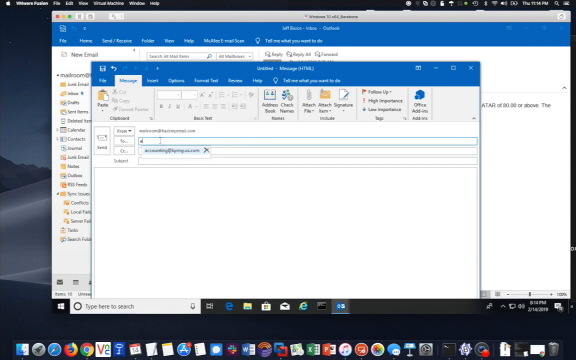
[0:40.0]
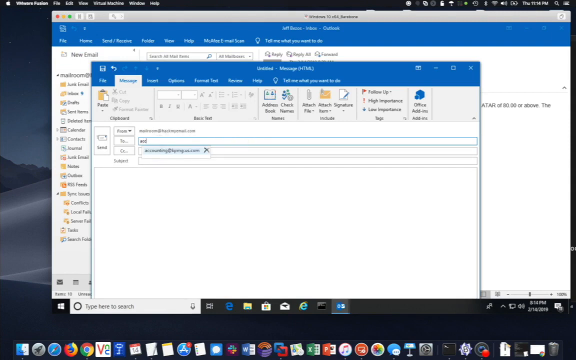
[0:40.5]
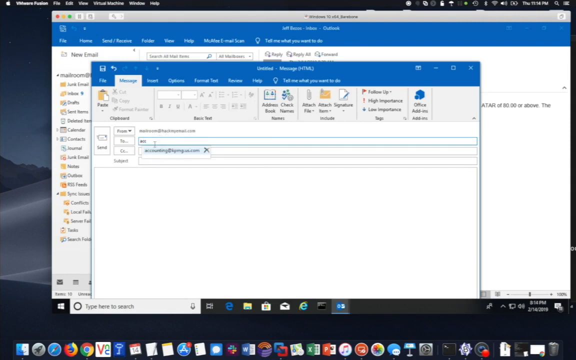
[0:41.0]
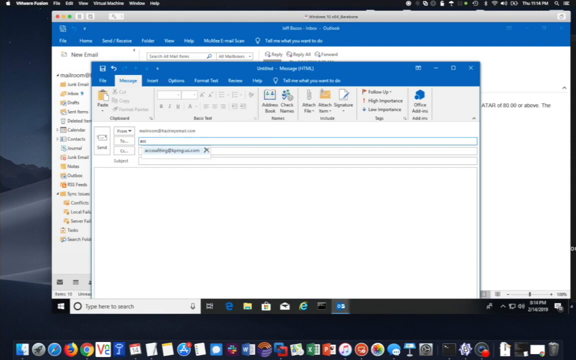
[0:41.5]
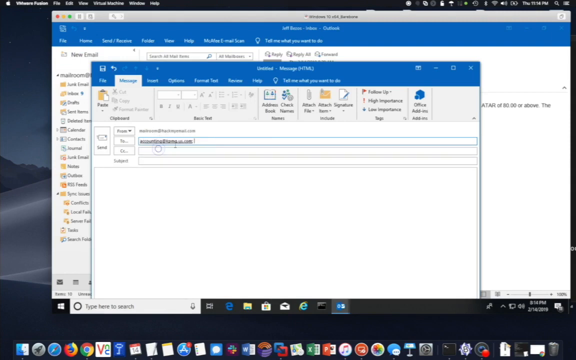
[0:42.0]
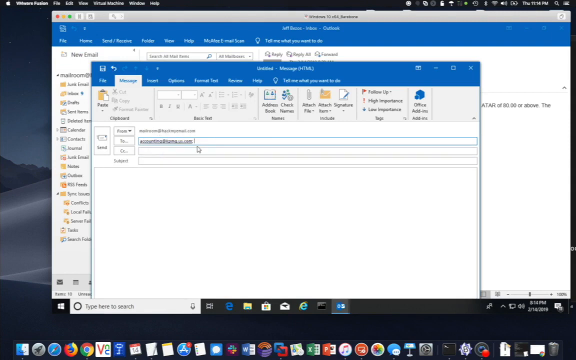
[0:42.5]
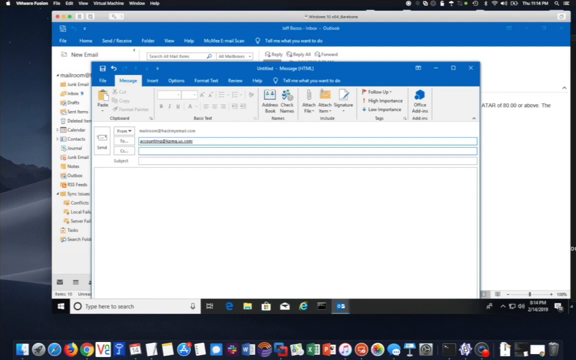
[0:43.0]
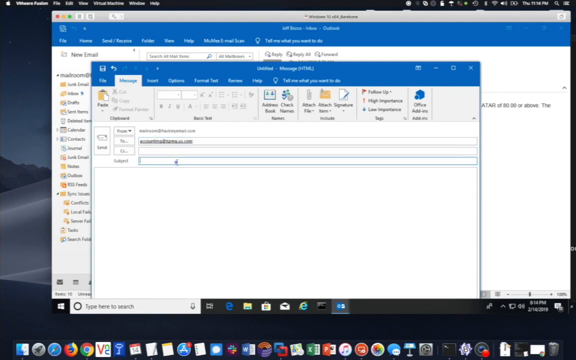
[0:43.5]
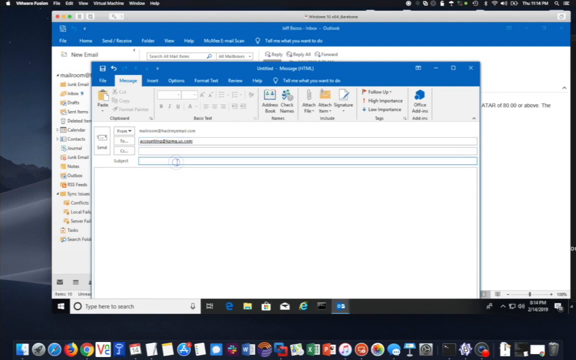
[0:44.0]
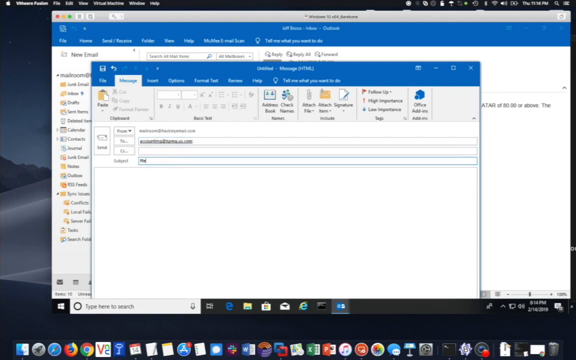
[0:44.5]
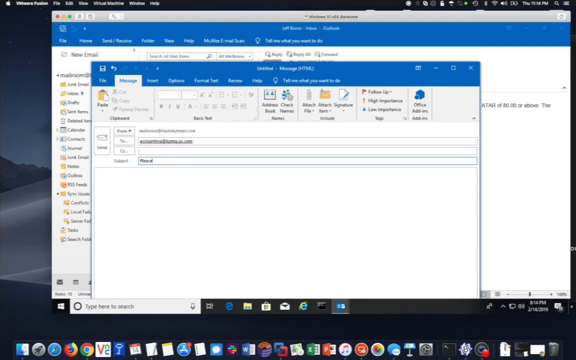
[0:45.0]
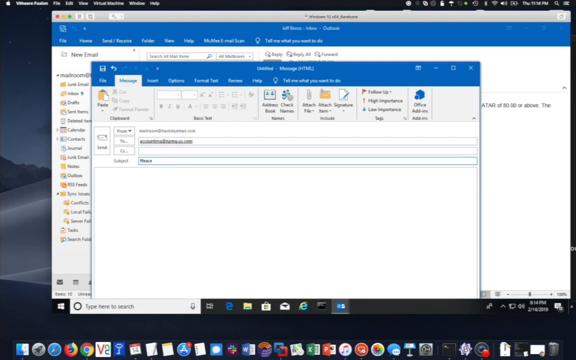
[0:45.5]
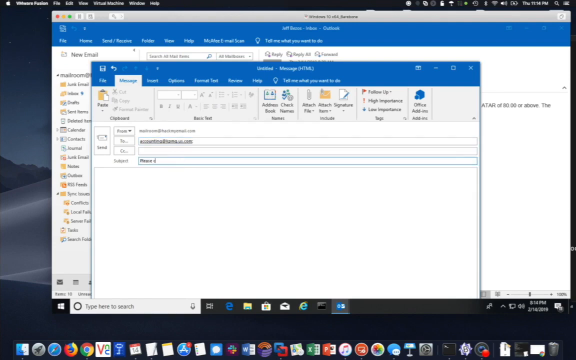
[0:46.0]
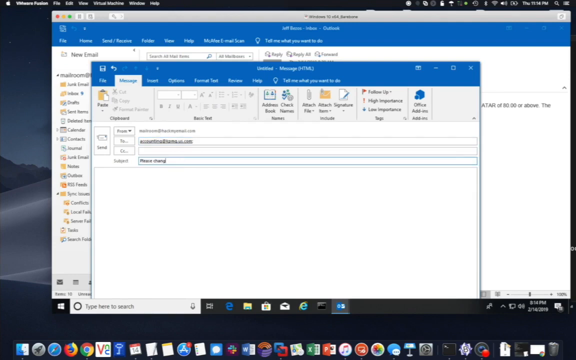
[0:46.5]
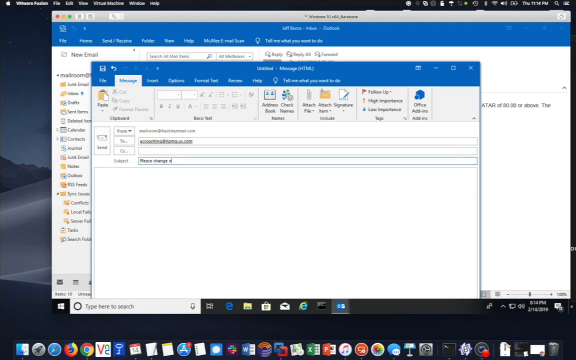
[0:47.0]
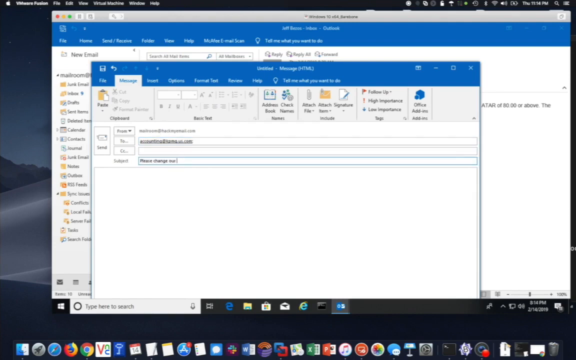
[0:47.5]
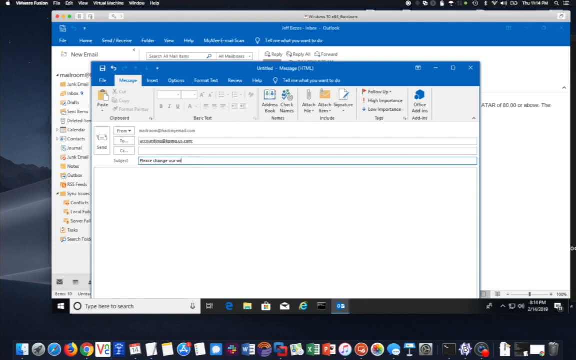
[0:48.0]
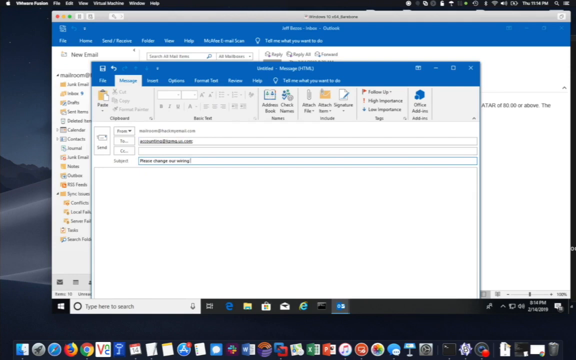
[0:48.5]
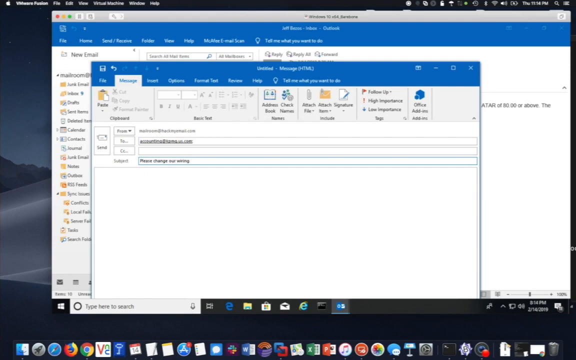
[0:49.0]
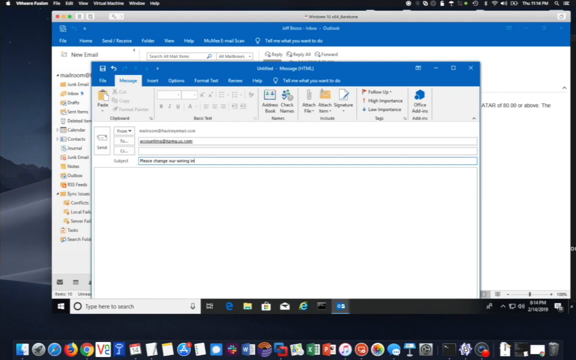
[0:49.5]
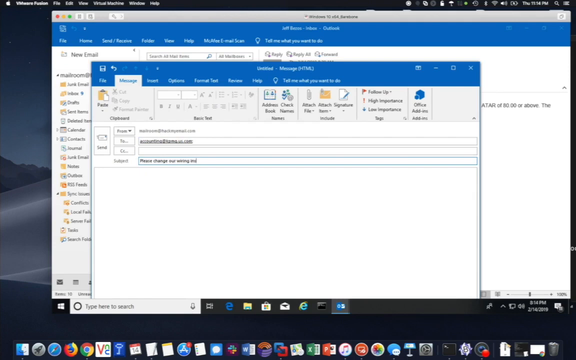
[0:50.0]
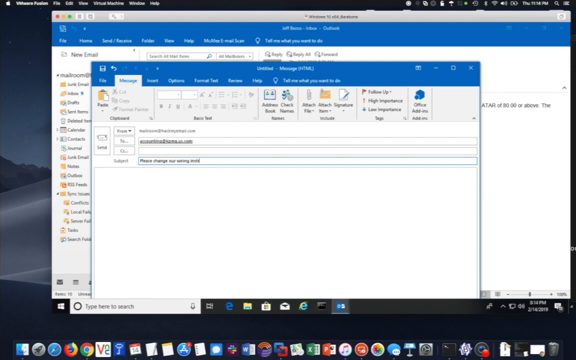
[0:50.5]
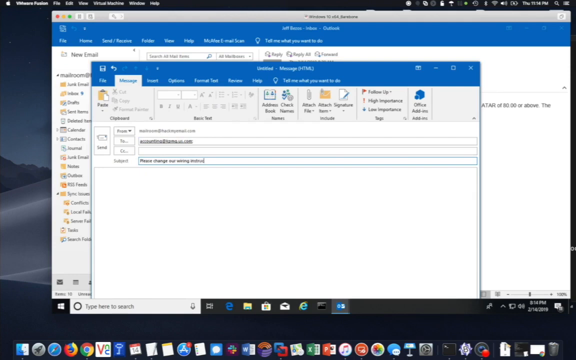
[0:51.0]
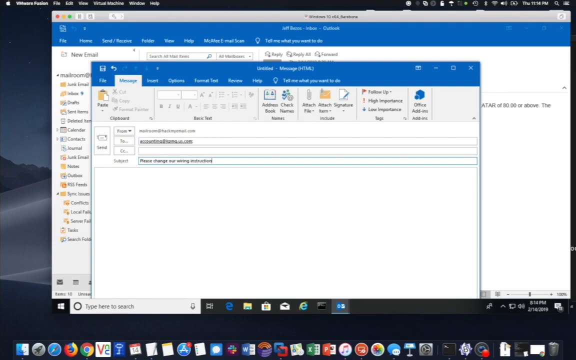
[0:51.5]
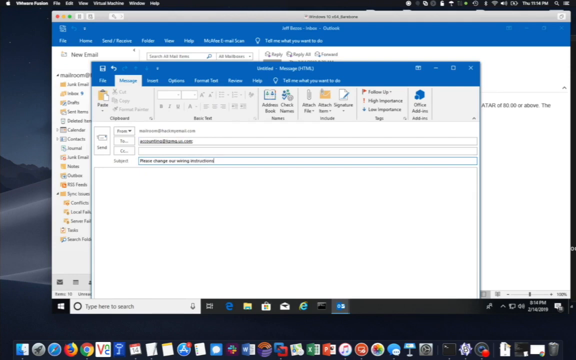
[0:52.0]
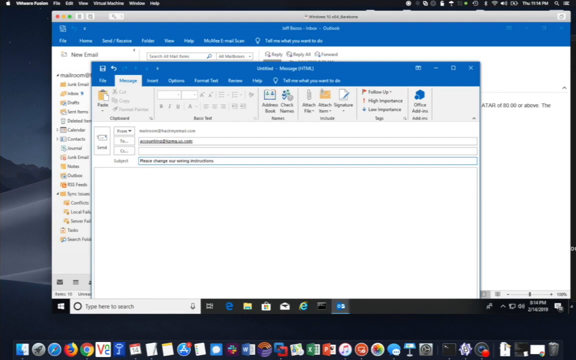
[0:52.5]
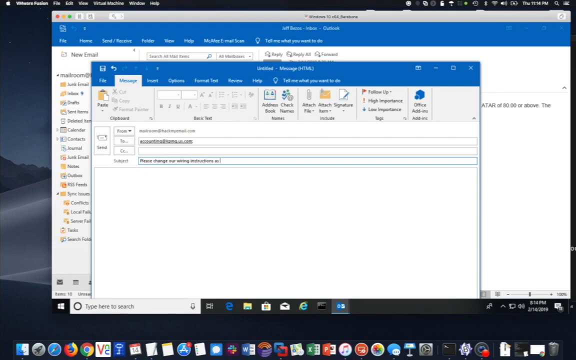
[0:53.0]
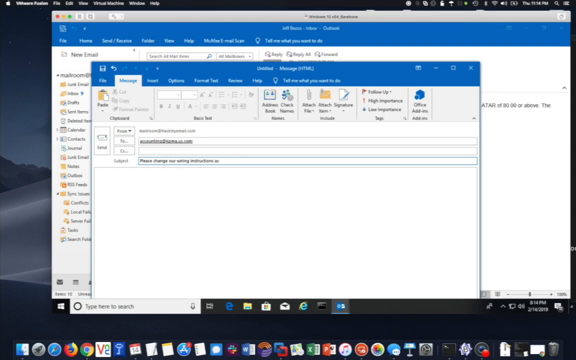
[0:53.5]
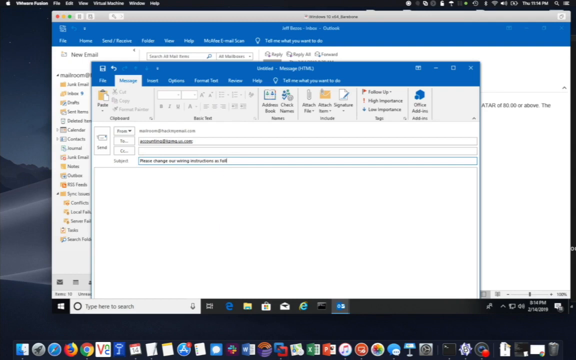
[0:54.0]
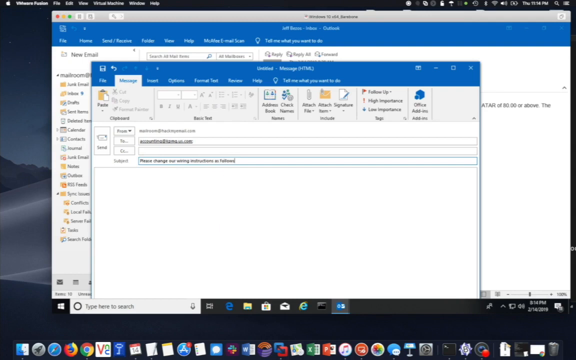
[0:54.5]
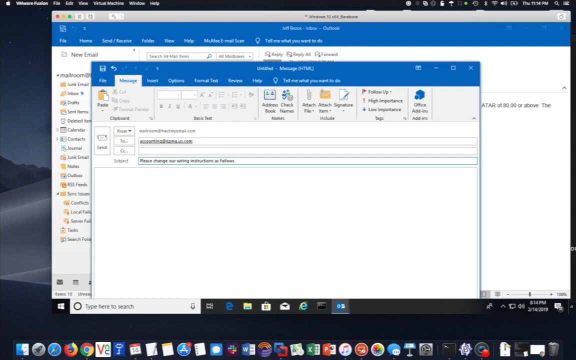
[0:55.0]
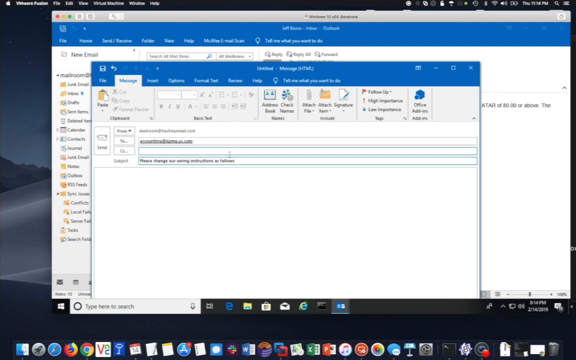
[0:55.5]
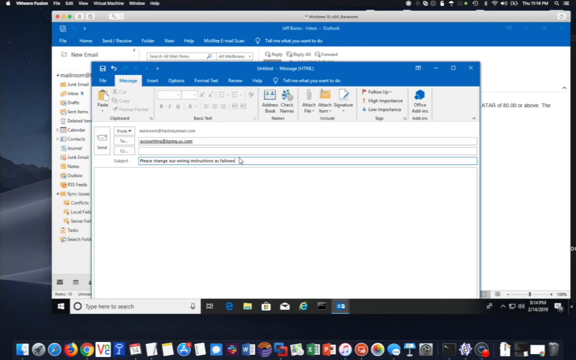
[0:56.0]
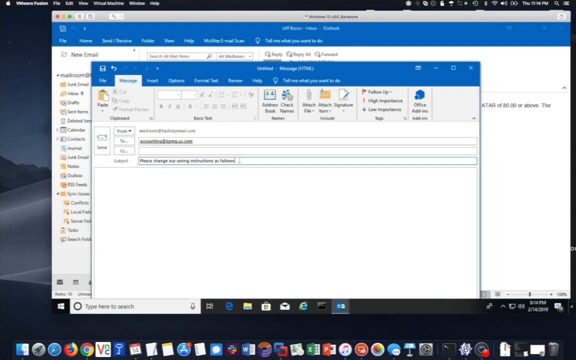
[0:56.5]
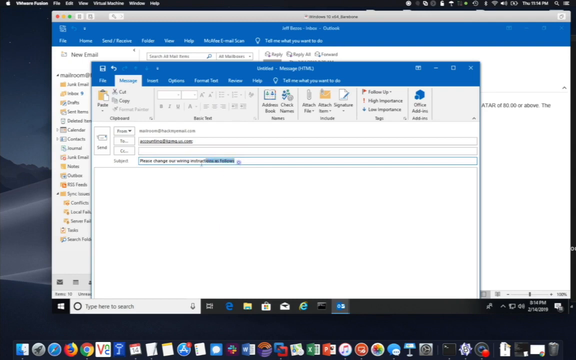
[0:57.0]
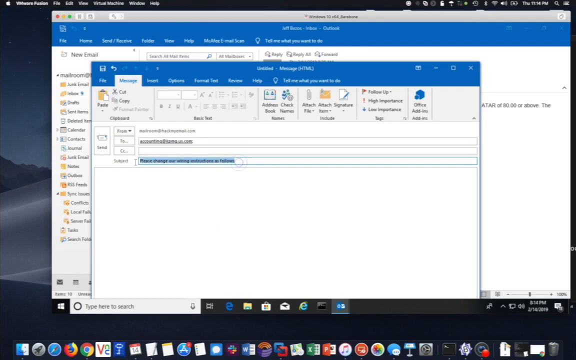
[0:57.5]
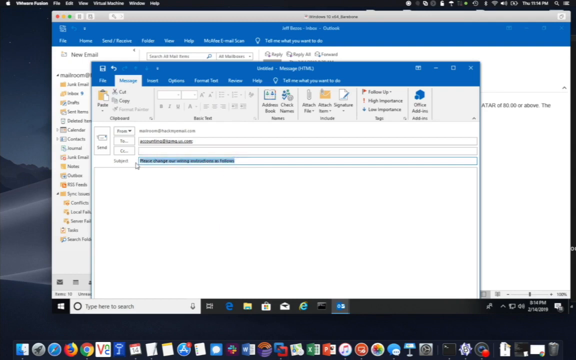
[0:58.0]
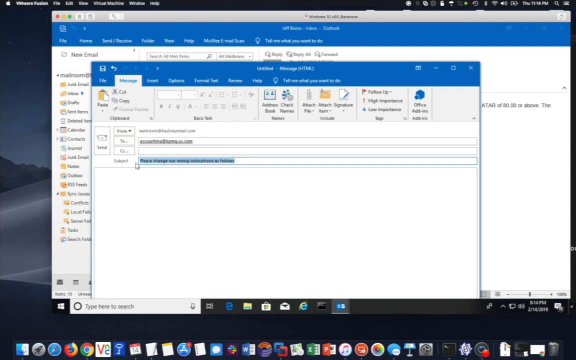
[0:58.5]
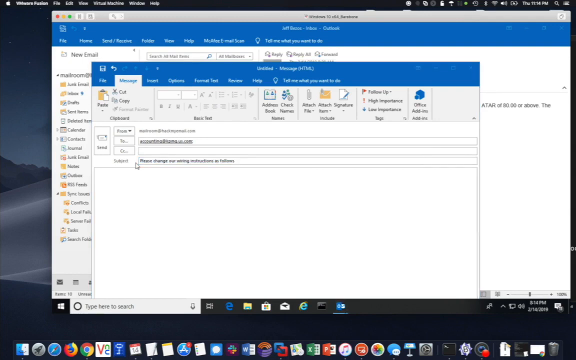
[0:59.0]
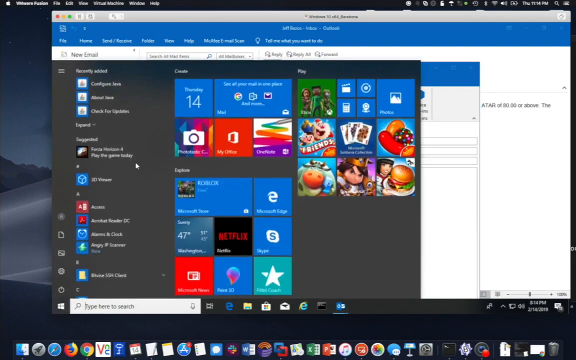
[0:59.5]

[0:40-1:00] On an open computer screen, an email page is open in the back and a smaller page in front of it is for sending a message. Someone writes an email address in the To box, a drop-down menu appears with a complete email address, and the cursor clicks on it, auto-filling the To box. The cursor then clicks the subject box and someone begins typing. The text begins "please change," but the rest is very fuzzy and difficult to see; the entire screen is somewhat blurry. After the text is typed in the subject box, the cursor highlights it in blue. Another window then pops up from the bottom and is briefly seen as the shot ends.